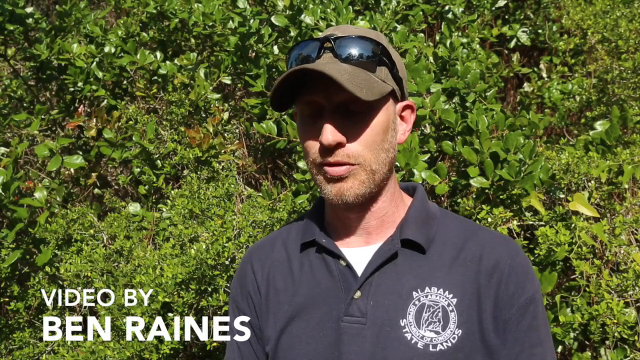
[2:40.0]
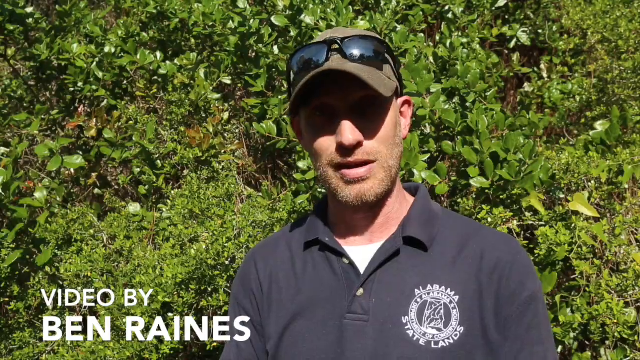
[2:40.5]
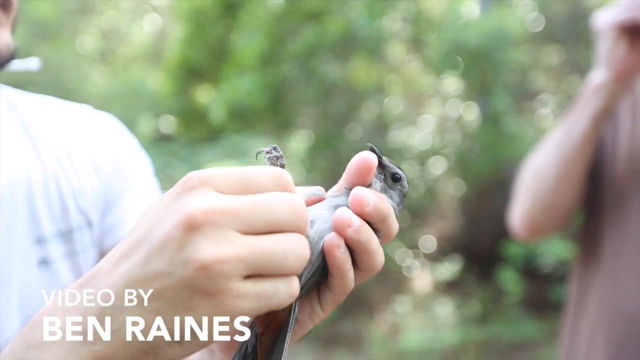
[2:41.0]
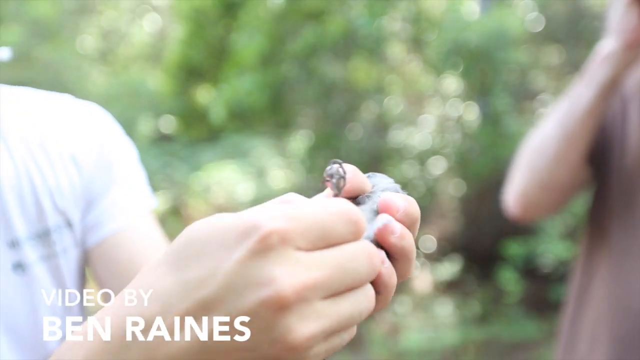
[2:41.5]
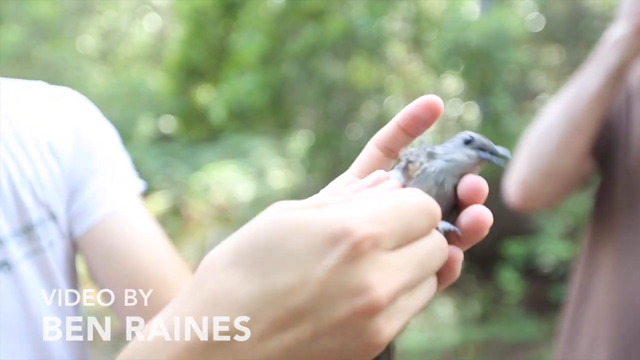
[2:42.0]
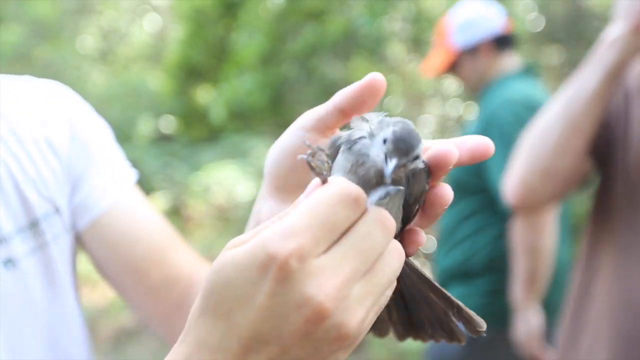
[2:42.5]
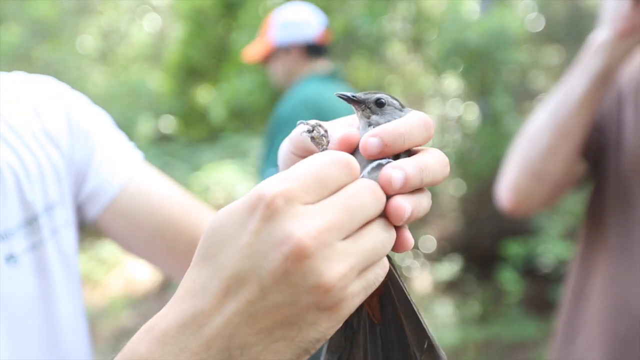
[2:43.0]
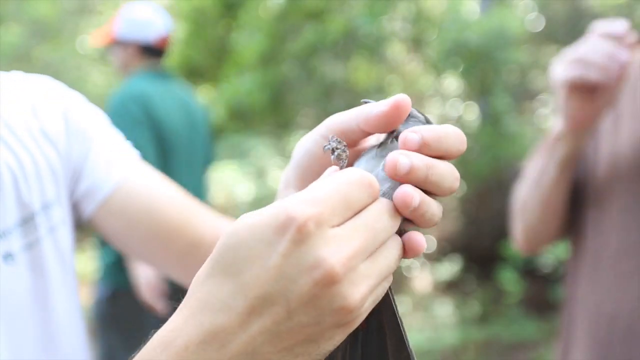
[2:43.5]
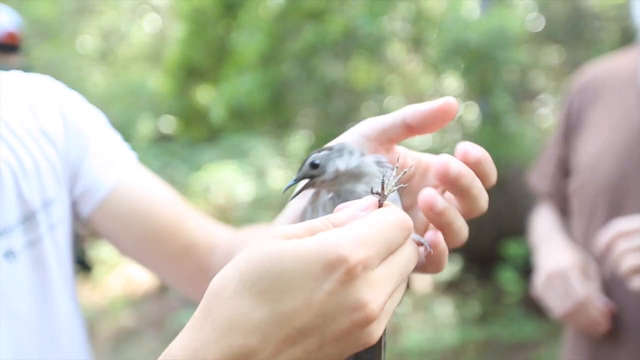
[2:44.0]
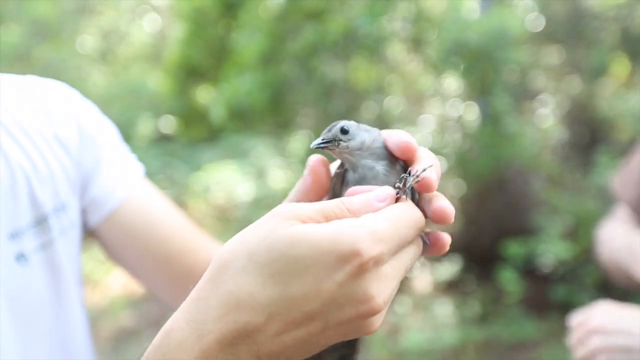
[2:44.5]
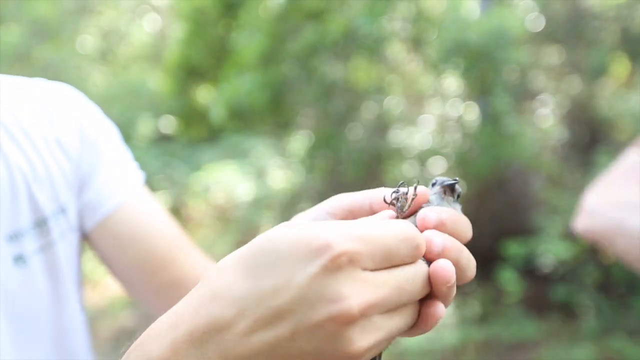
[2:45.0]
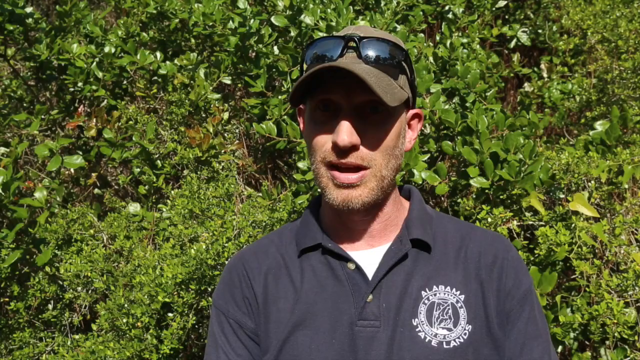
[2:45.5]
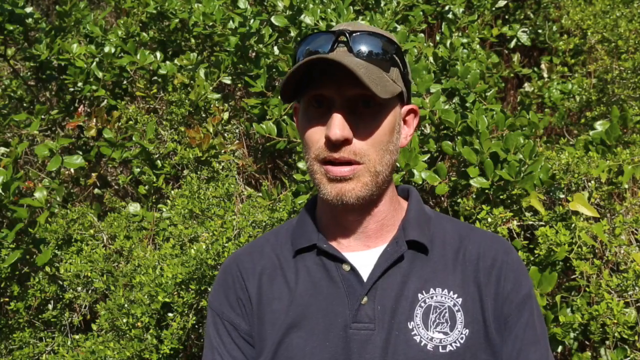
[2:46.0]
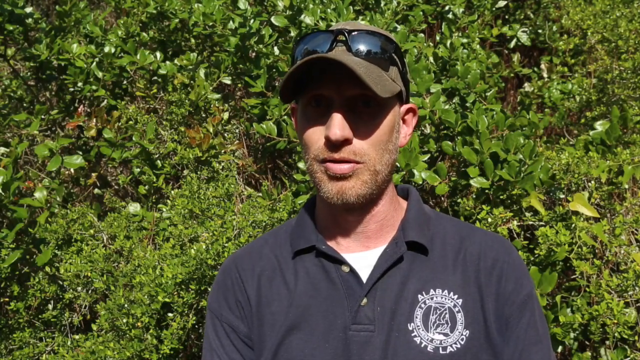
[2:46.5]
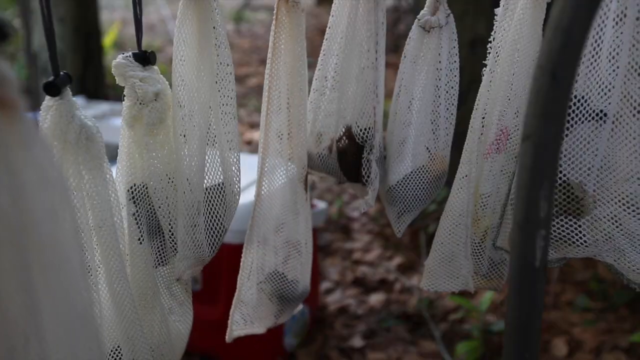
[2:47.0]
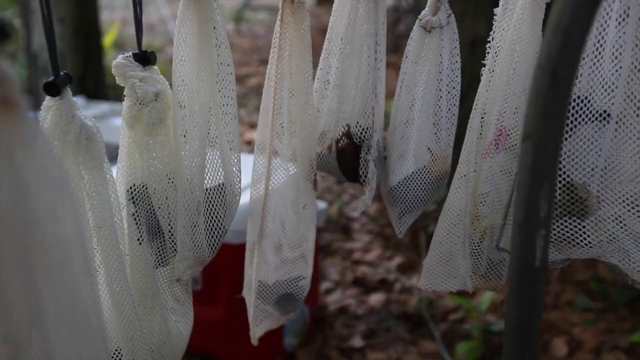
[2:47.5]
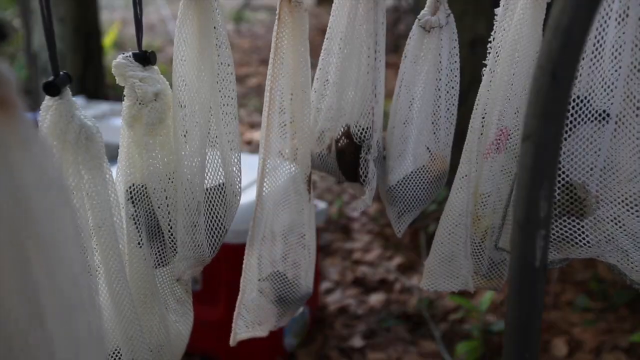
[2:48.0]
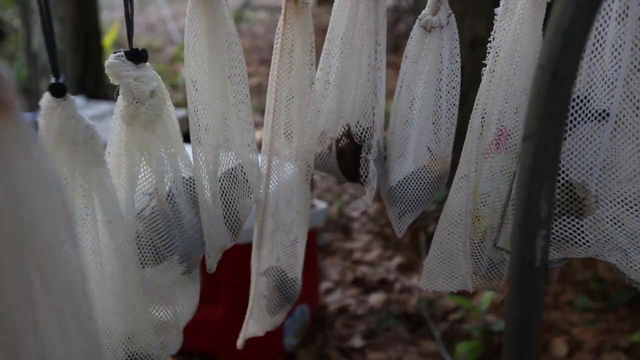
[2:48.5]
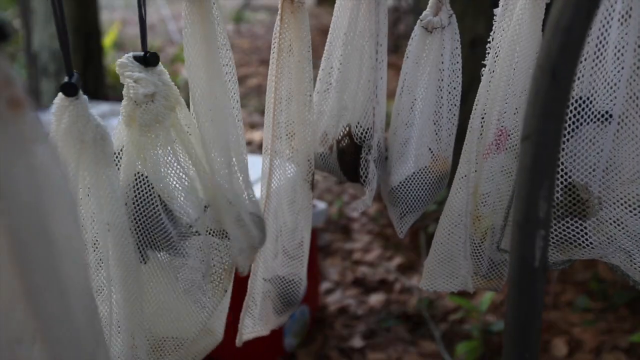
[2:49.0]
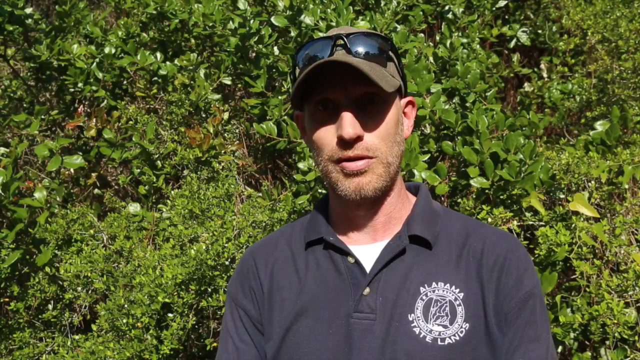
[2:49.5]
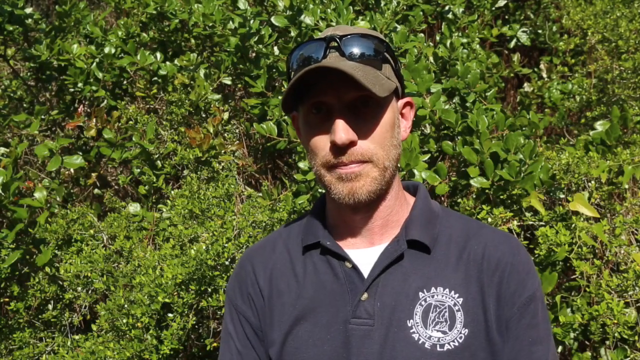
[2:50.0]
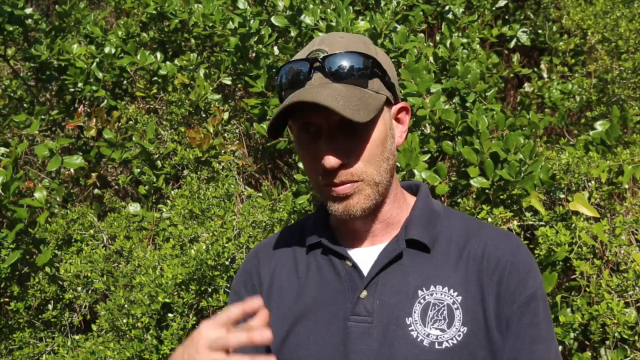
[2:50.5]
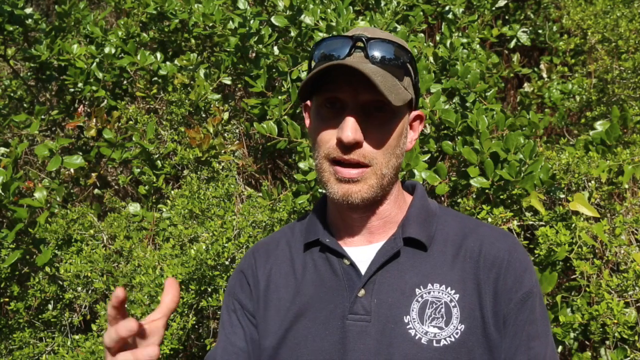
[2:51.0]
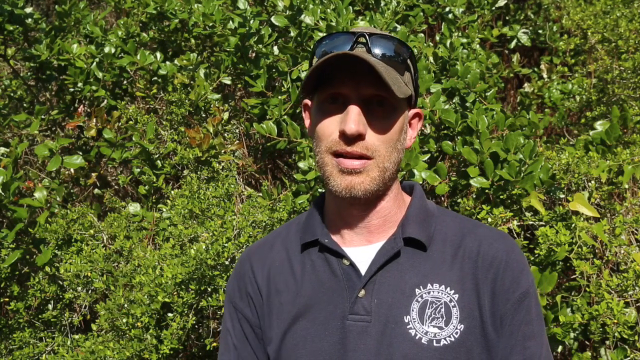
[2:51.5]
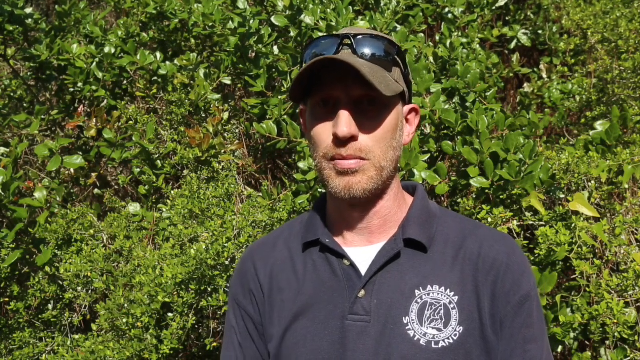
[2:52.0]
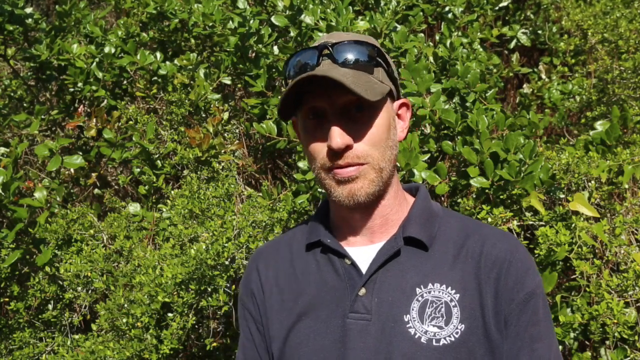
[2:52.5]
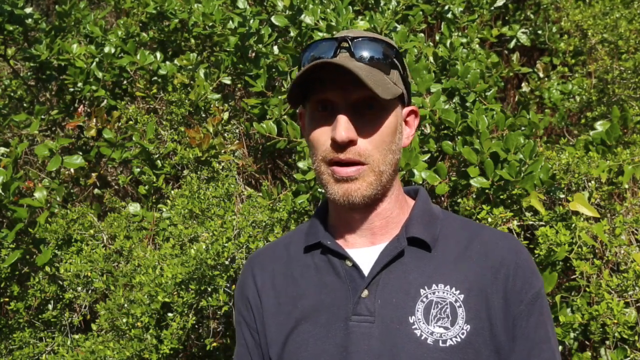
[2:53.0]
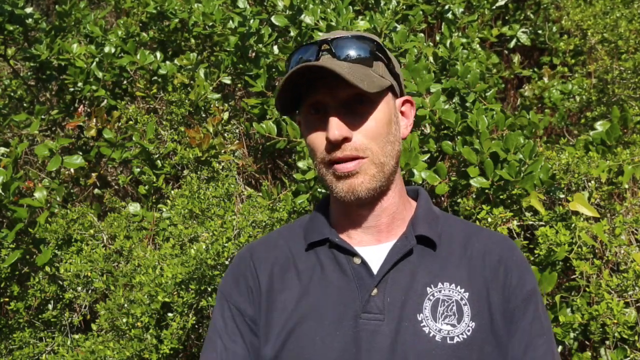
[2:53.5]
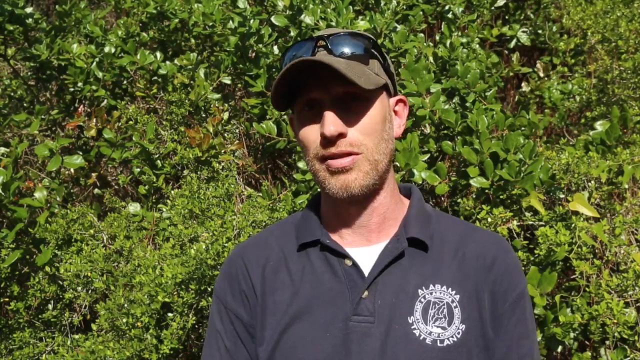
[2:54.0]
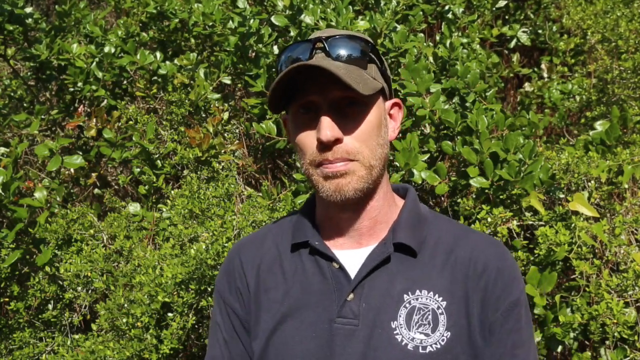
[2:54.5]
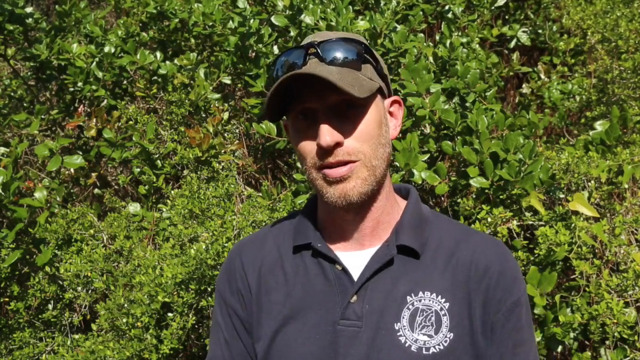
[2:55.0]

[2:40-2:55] Text credits the video to Ben Raines. A person holds a bird in their hand and struggles with it, touching it around its legs while the bird keeps fluttering. A man in a red t-shirt, brown cap and black sunglasses continues to talk, standing in front of greenery.